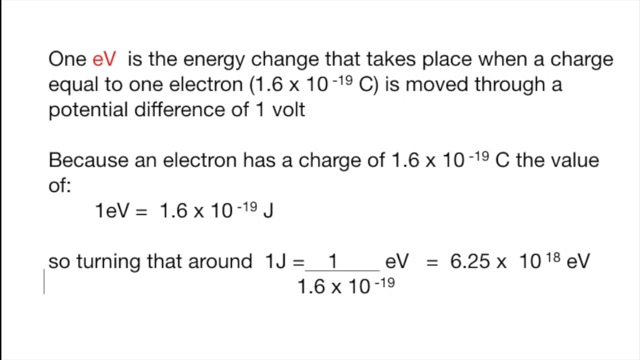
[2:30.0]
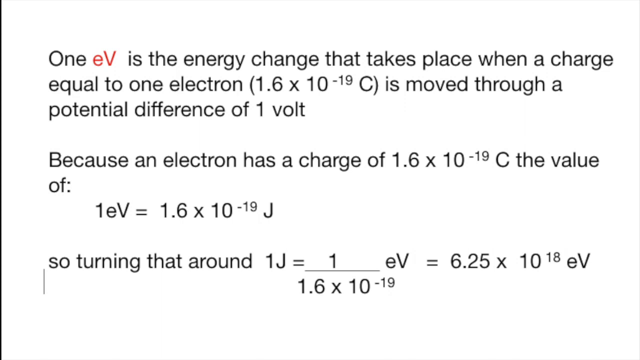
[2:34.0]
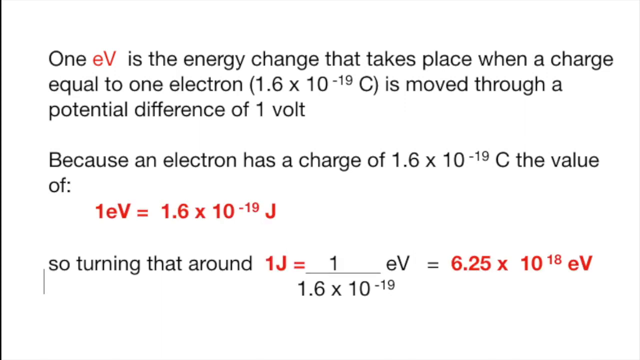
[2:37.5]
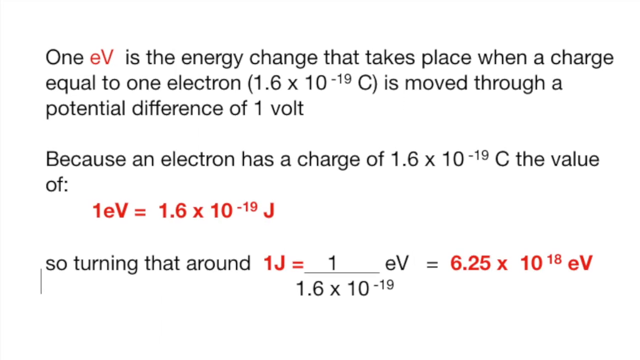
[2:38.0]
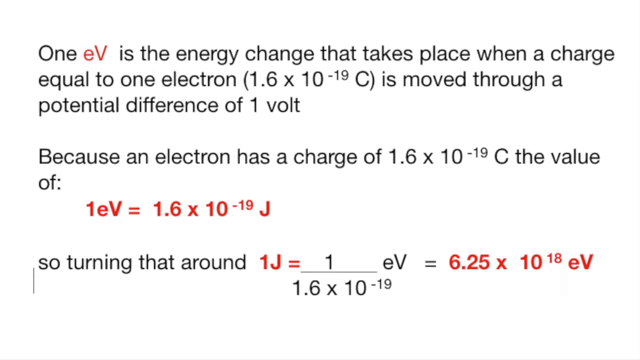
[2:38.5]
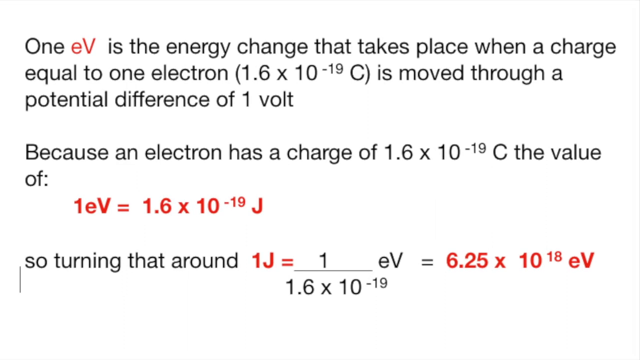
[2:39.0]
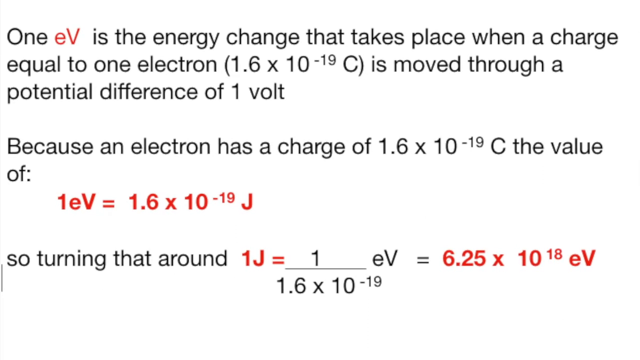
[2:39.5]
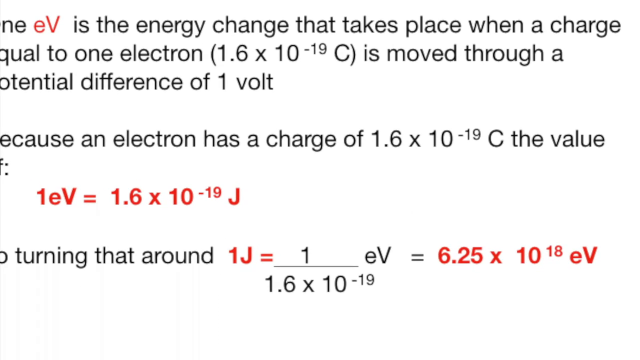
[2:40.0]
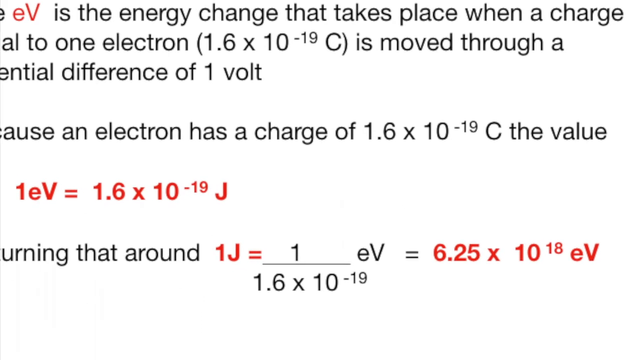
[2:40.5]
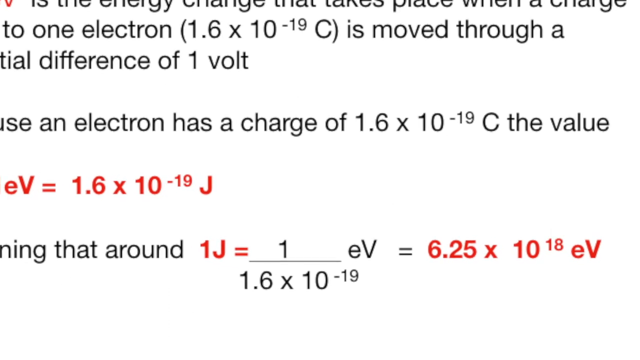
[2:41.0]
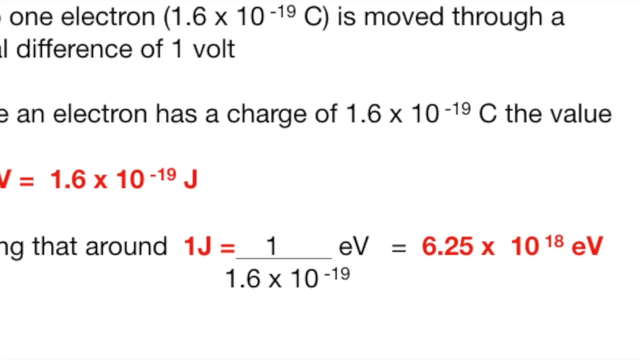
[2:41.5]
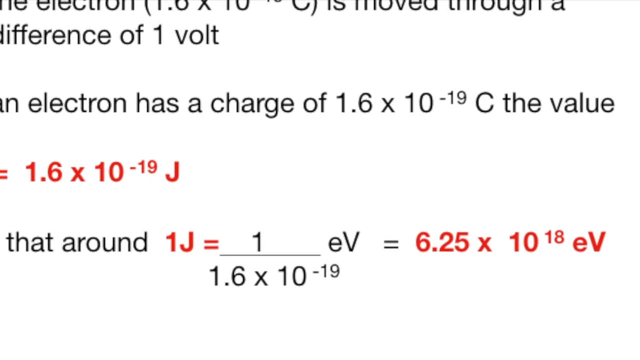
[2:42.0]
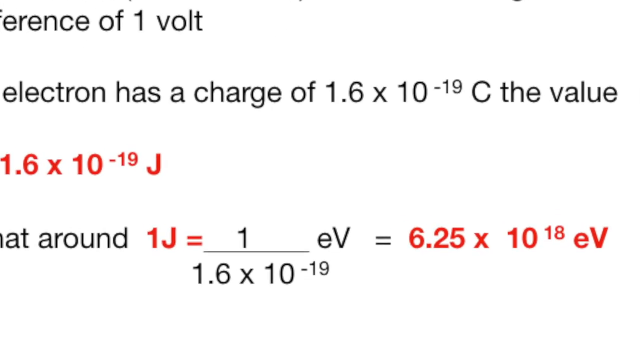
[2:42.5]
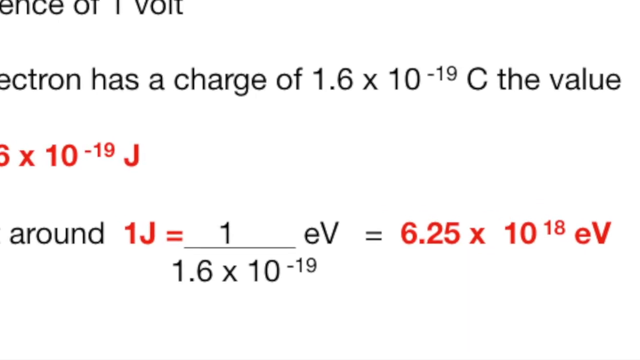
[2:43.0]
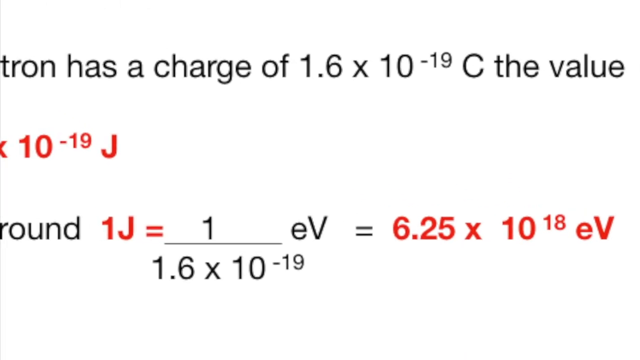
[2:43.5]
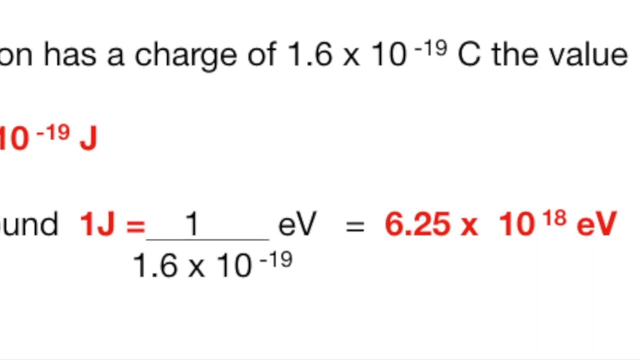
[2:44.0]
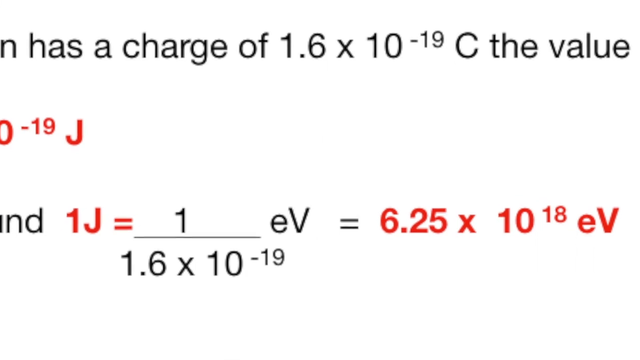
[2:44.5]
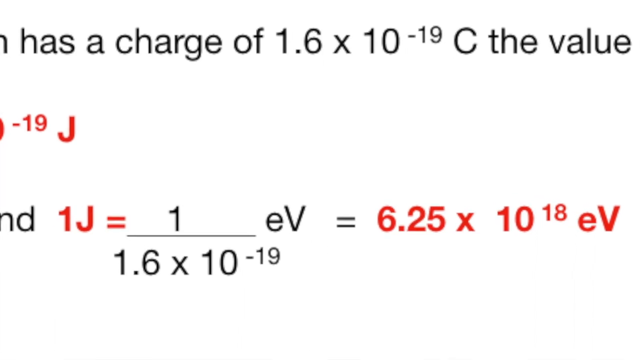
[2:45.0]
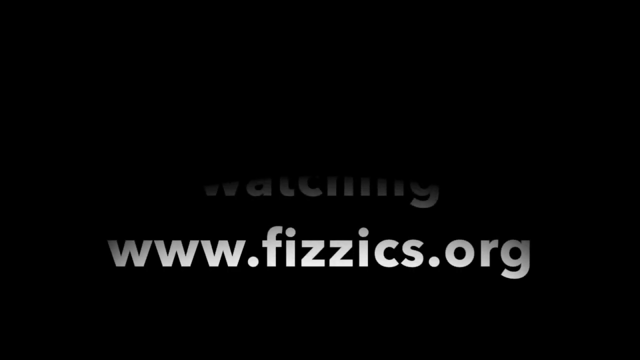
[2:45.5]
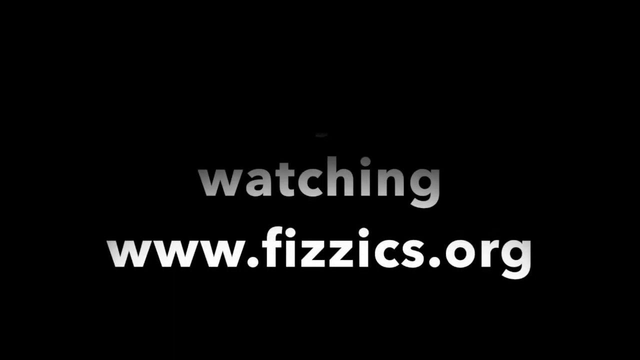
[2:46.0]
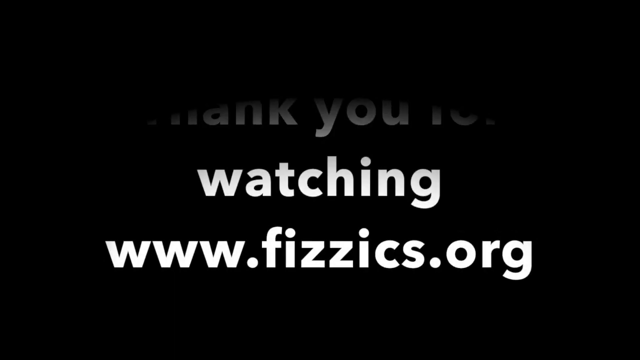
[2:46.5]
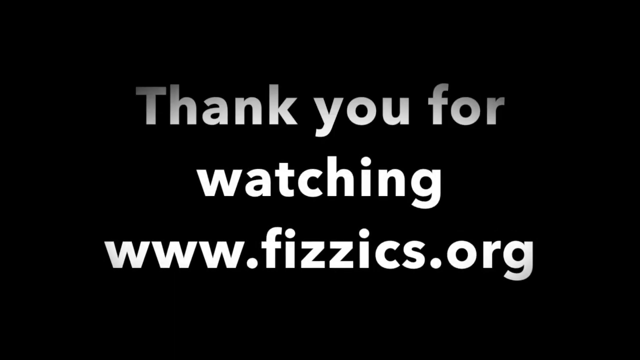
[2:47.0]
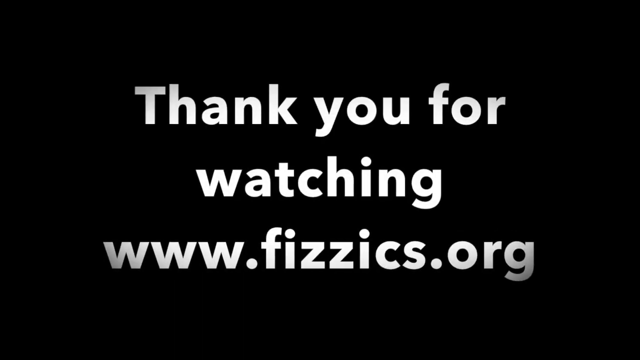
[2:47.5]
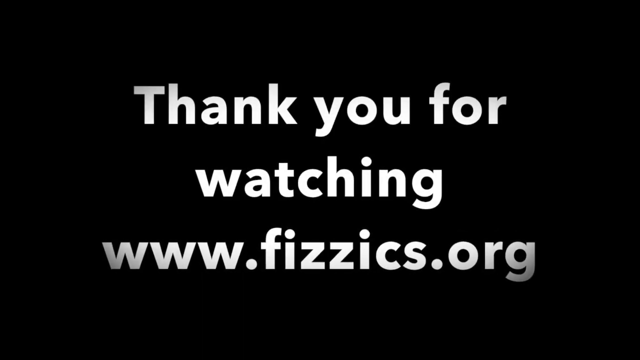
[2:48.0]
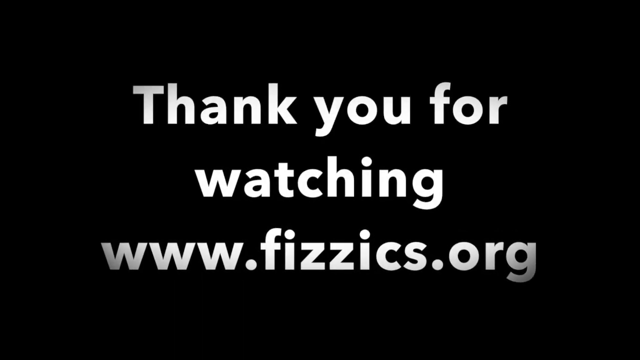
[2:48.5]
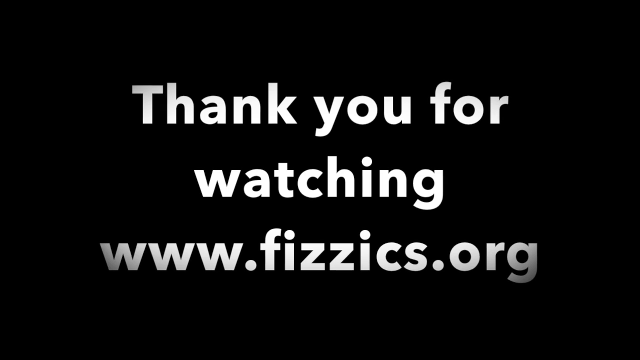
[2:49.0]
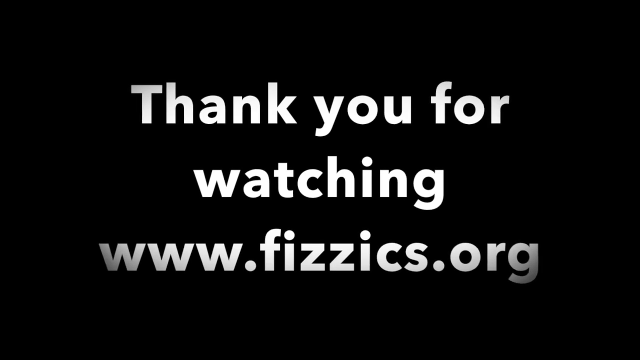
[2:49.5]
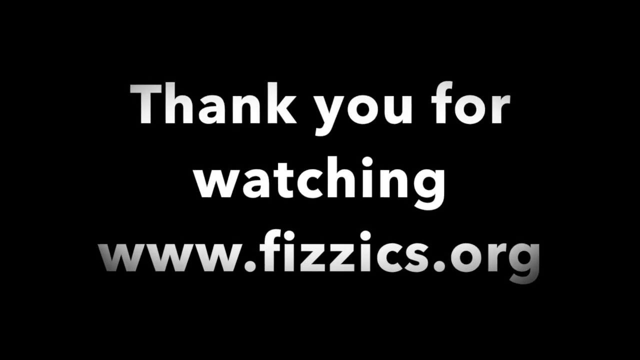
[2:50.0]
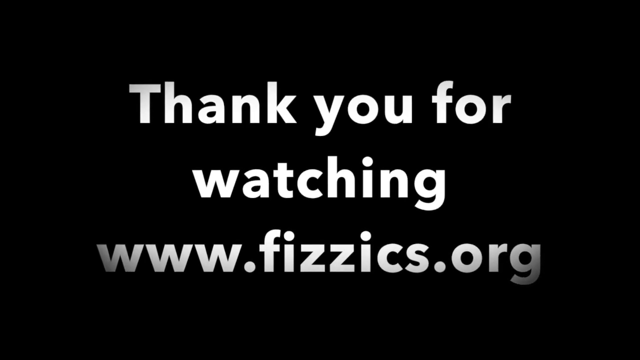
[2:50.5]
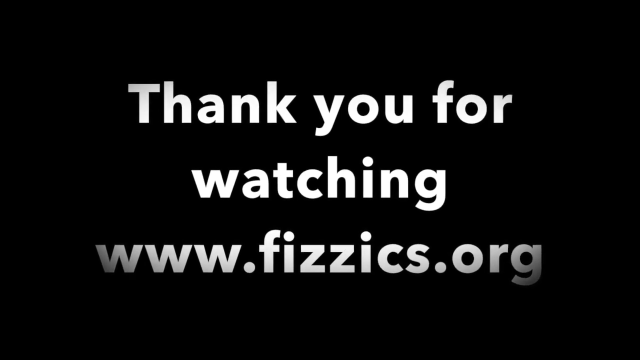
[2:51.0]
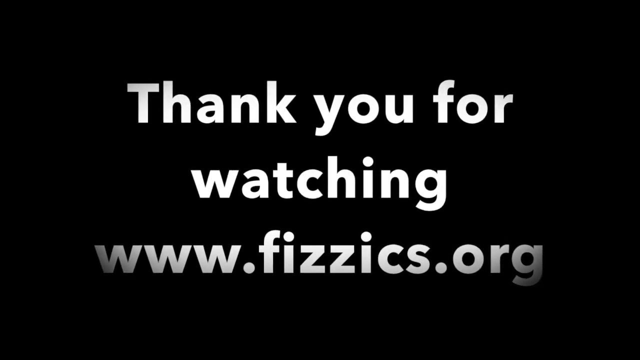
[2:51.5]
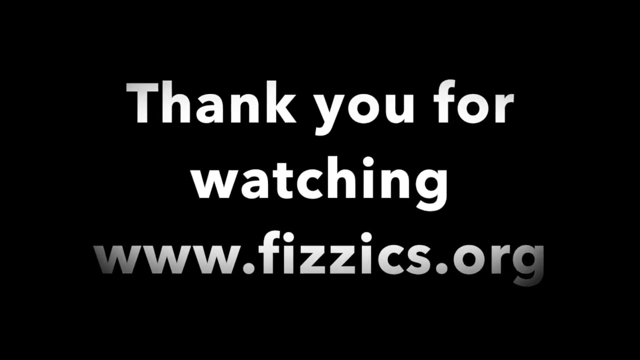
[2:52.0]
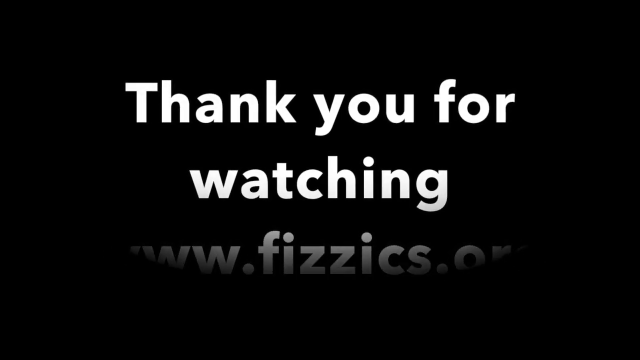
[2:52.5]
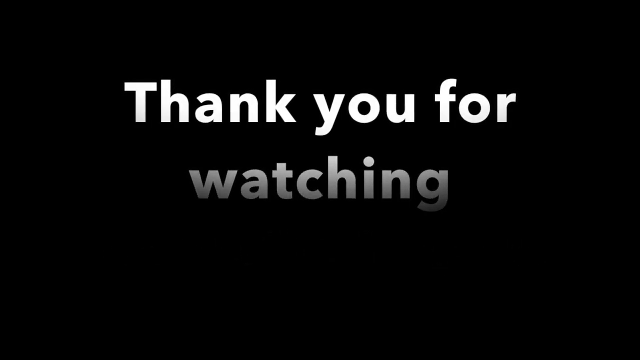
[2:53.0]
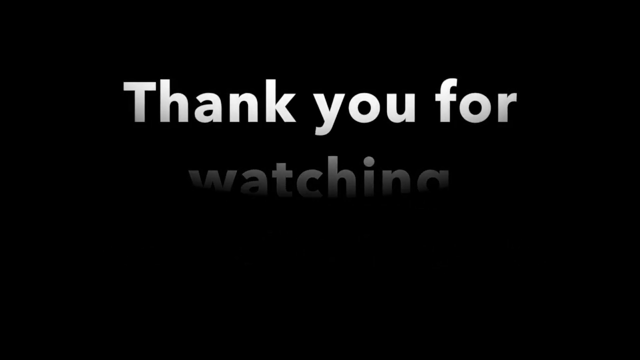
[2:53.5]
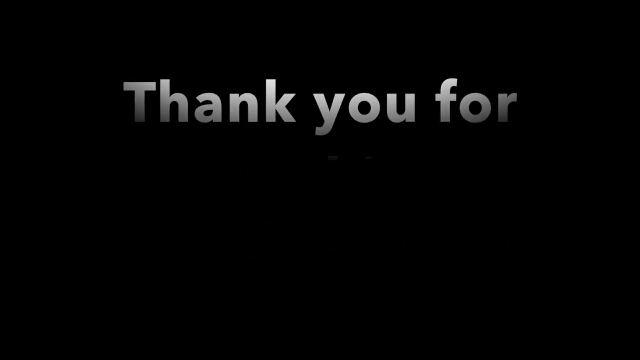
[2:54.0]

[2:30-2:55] On-screen text describes the energy change that takes place when an electron is moved through a potential difference of one volt, referring to the electron, the volt and the joule.